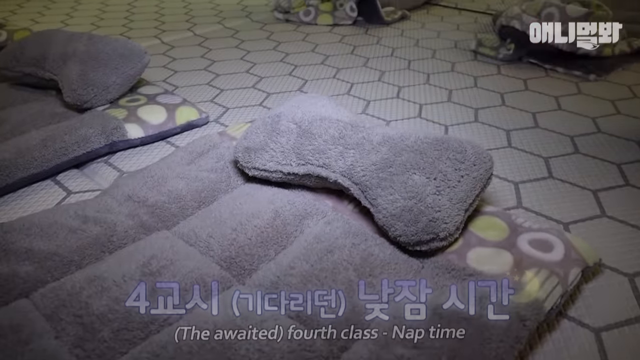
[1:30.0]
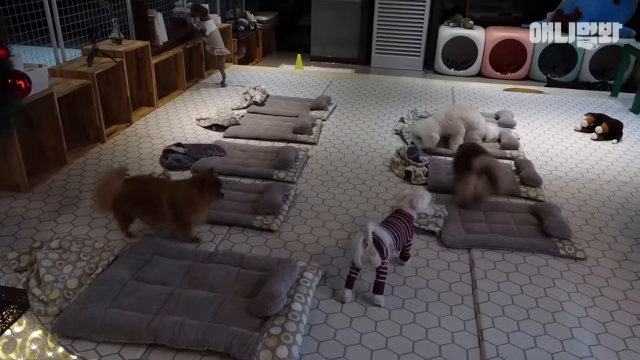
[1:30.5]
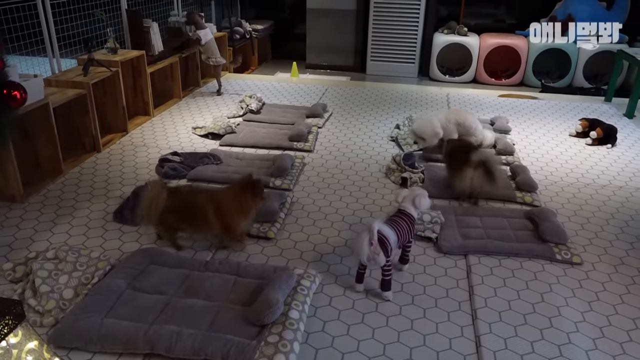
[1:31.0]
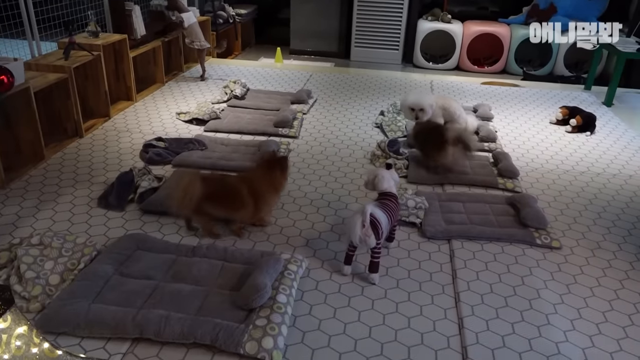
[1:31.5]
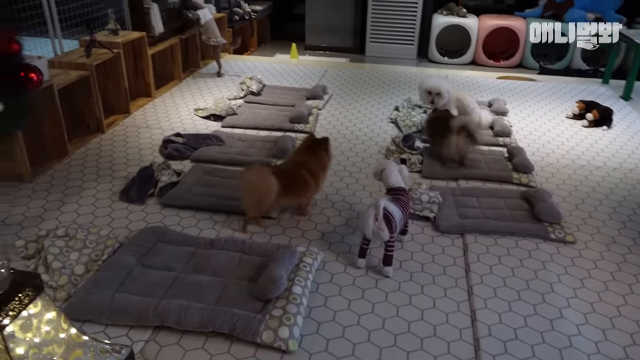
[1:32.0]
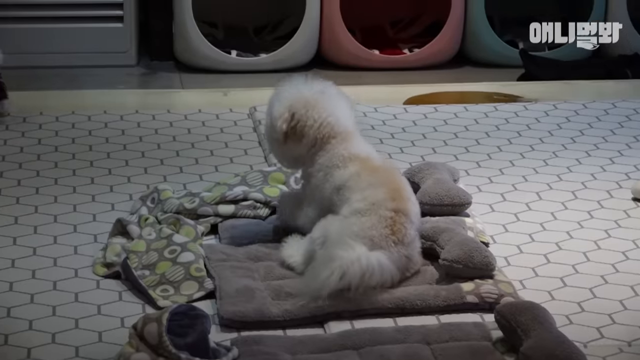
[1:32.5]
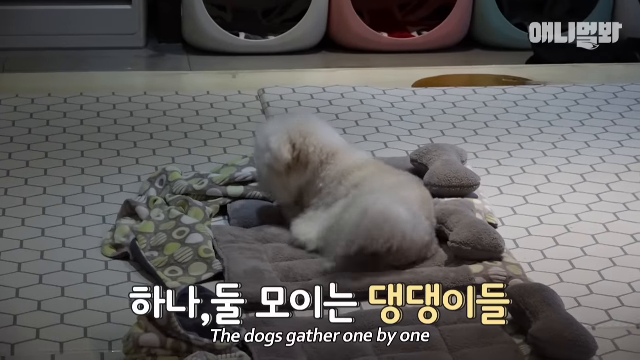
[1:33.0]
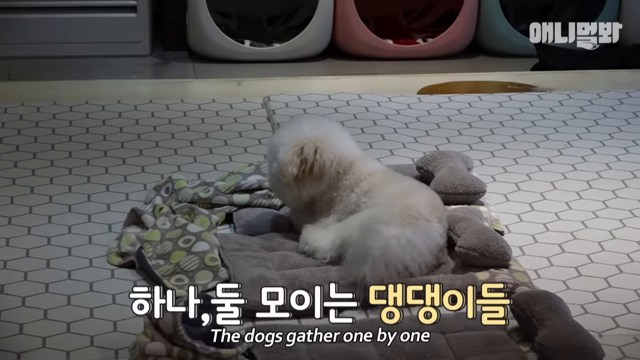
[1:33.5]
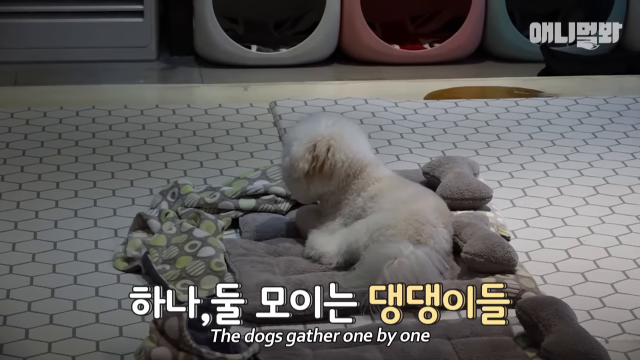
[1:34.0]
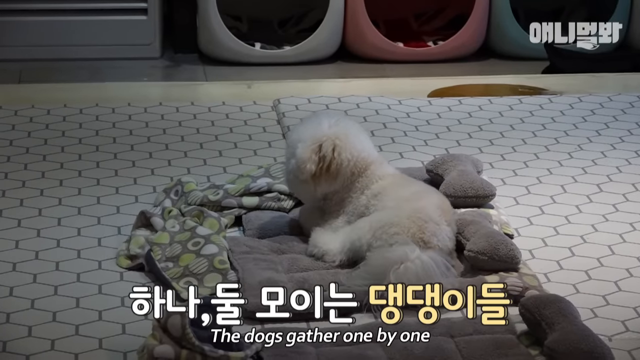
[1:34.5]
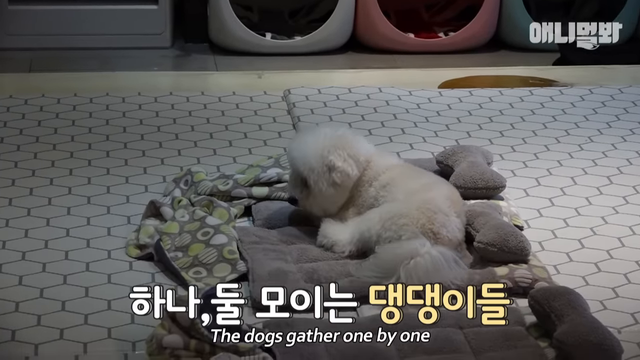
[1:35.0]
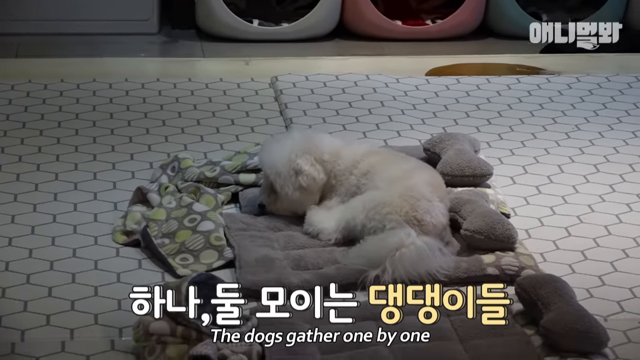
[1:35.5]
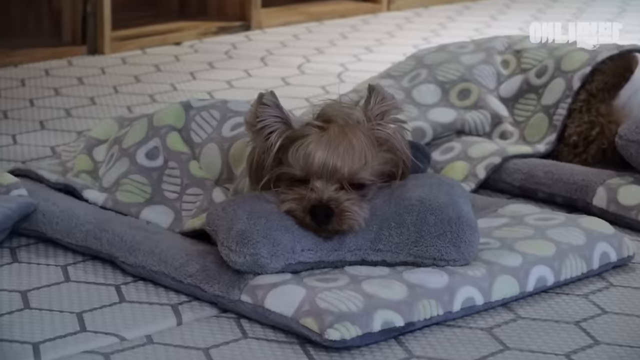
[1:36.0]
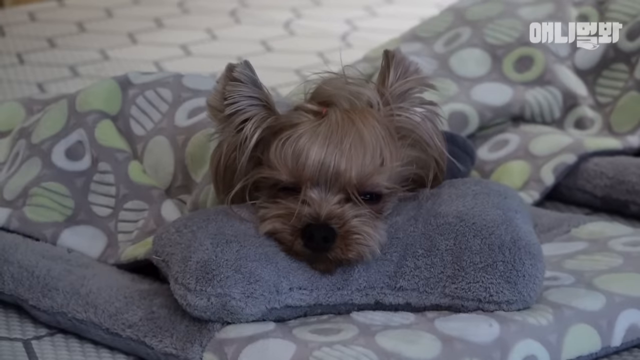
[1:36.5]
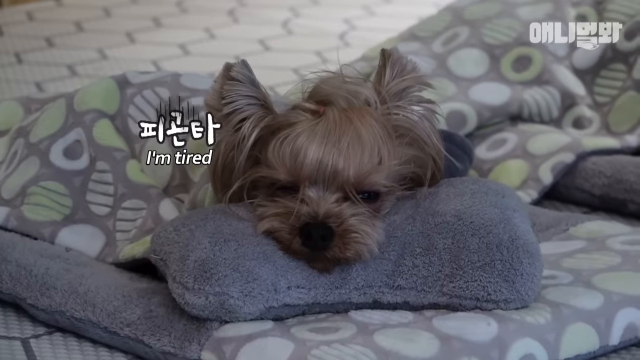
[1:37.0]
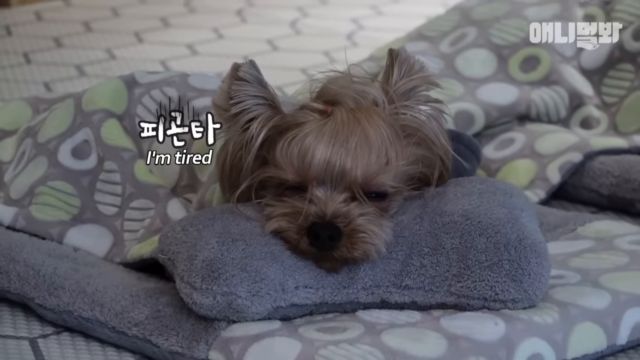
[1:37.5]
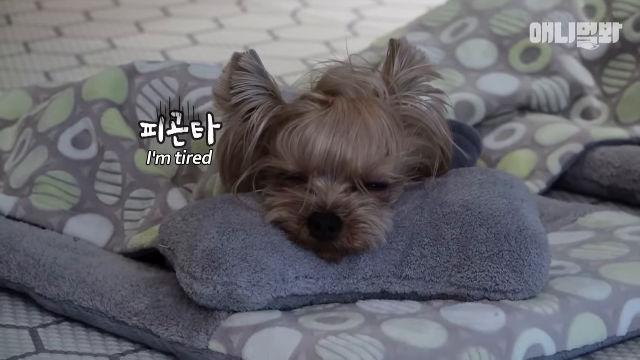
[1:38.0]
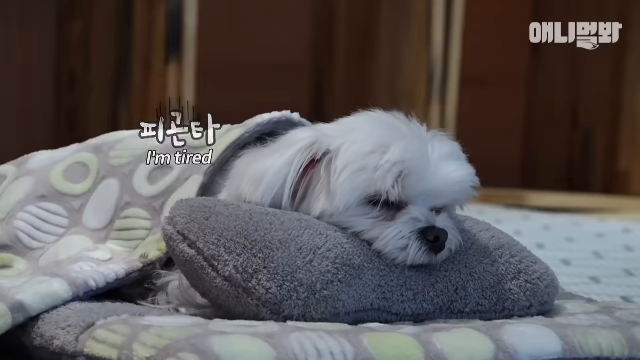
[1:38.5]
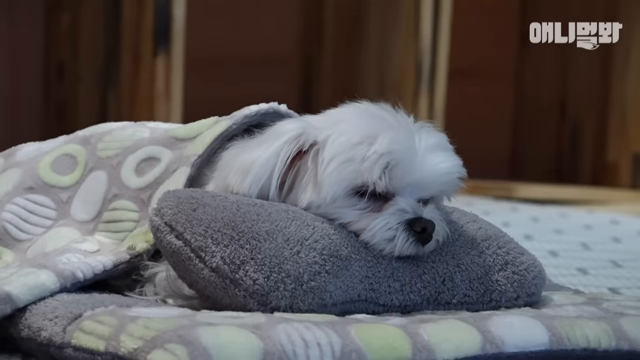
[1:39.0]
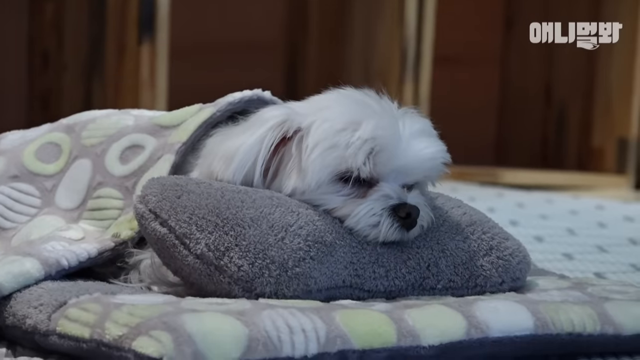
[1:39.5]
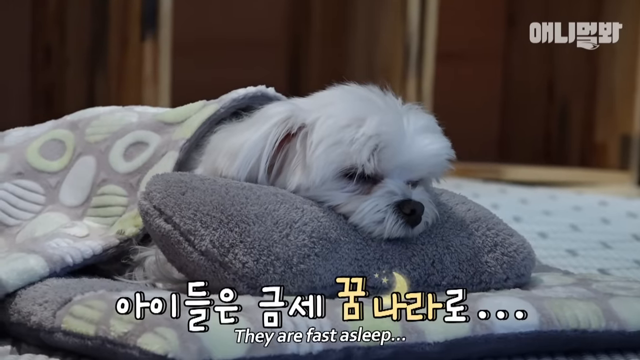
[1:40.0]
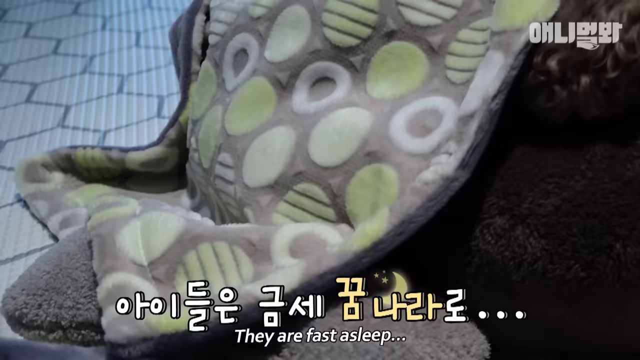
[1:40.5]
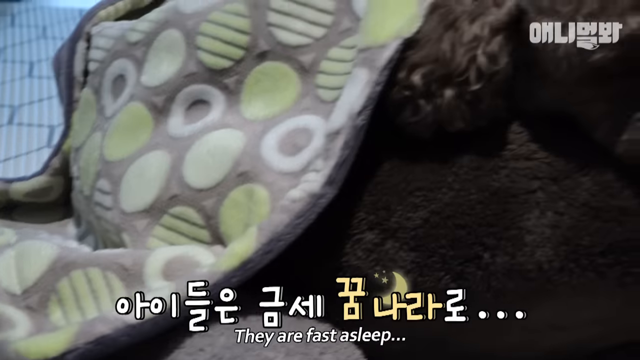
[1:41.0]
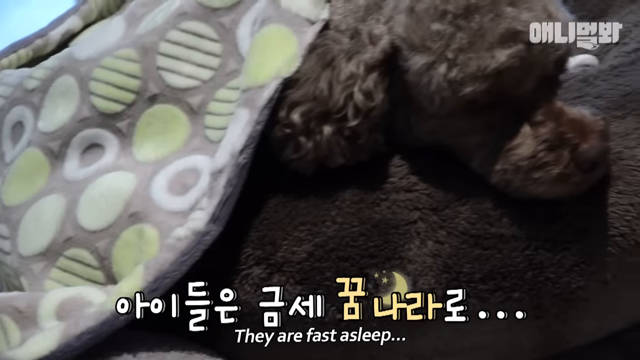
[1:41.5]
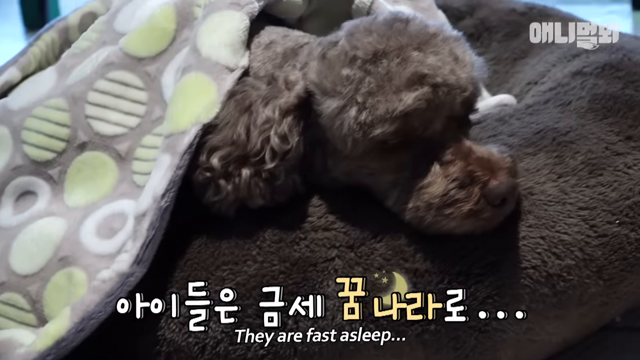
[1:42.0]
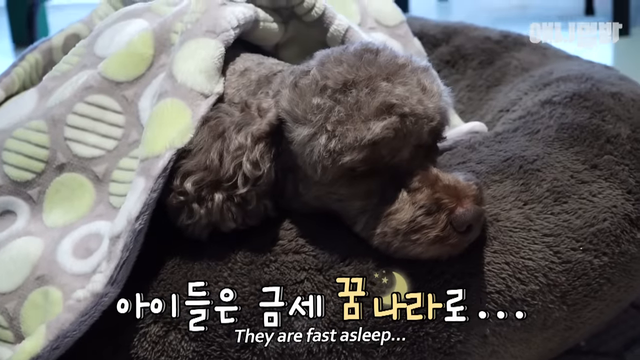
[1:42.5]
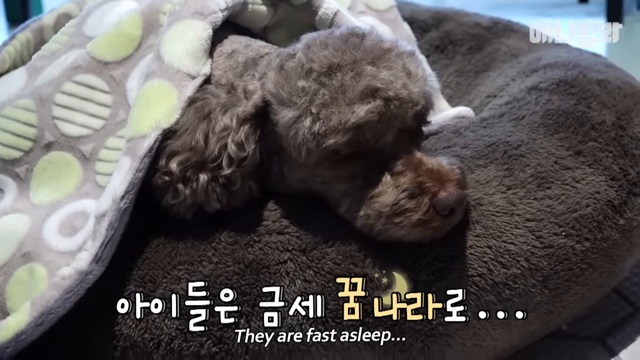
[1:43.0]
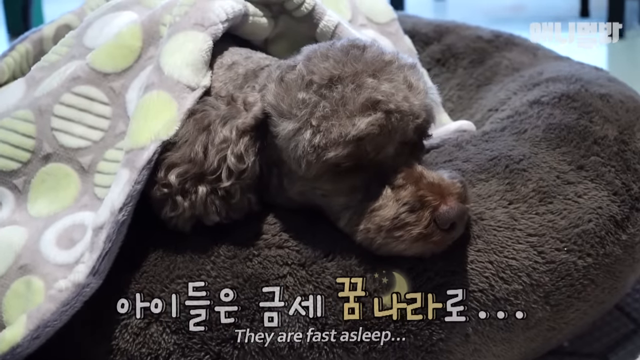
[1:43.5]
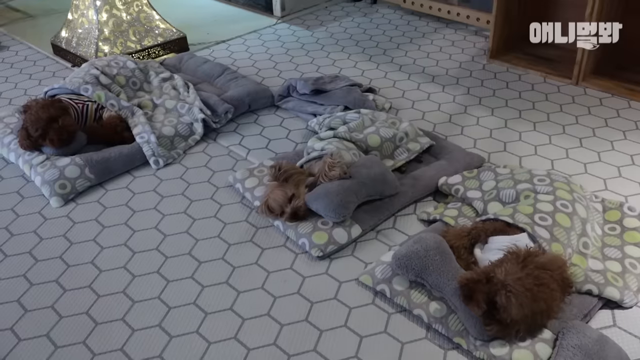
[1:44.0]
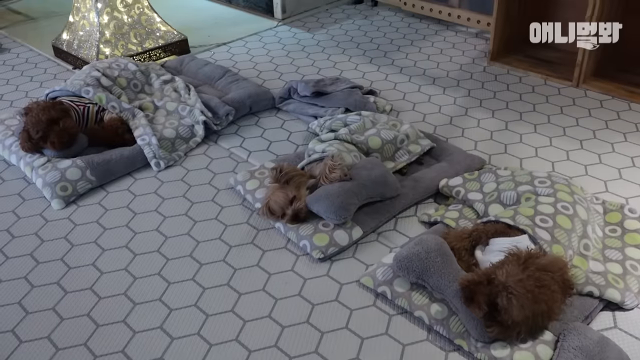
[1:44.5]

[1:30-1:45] The dogs get ready for bed, walking over to their beds and lying down. A white fluffy dog lies down and a furry brown one puts his head on the pillow. About four or five dogs are visible, all getting into bed. They look tired, and the caption says "I'm tired." Their eyes start to close, and then they are shown asleep on the beds with blankets on top of their bodies. The blankets have gray and green circles on them. In the background are cubby holes in different colors like red and green, square with rounded edges and round entrances. No humans appear. In the back is a dog with a tutu, a skinny brown dog that is looking on a shelf.